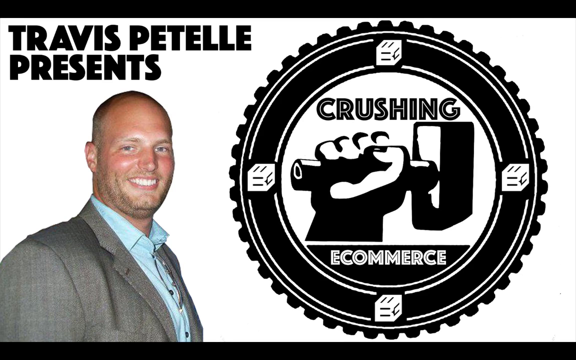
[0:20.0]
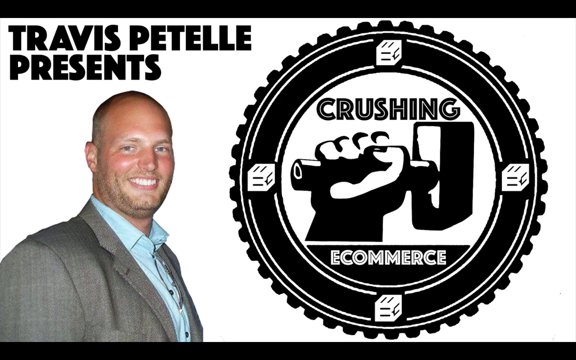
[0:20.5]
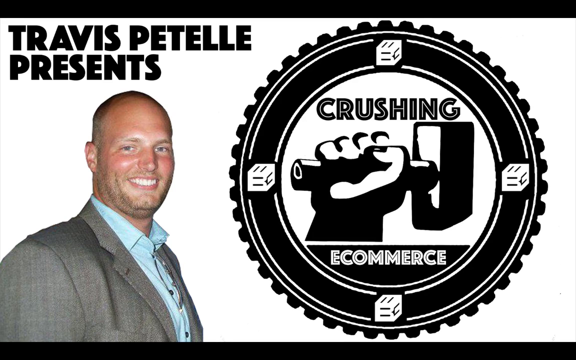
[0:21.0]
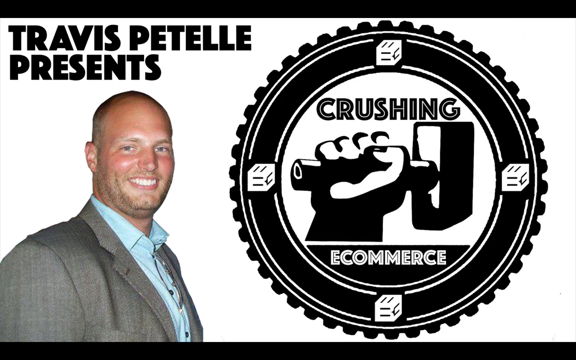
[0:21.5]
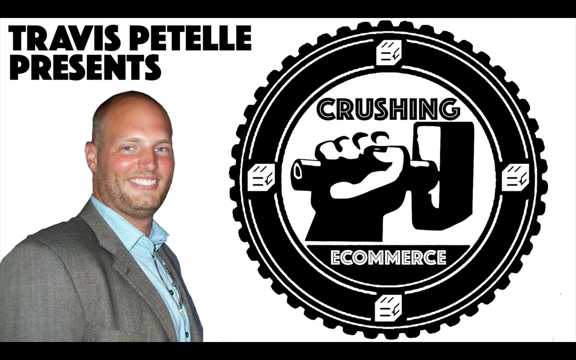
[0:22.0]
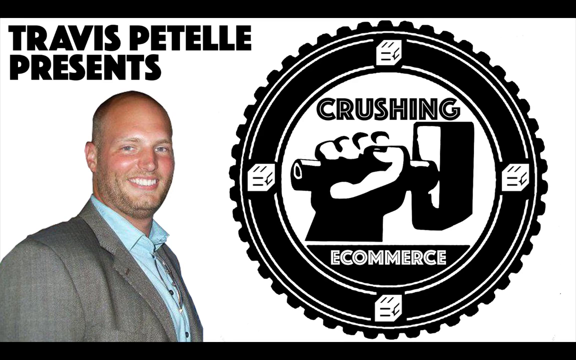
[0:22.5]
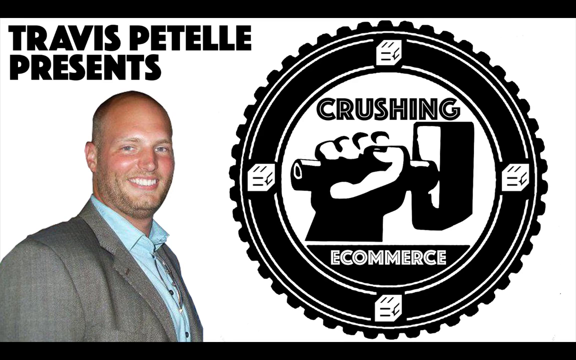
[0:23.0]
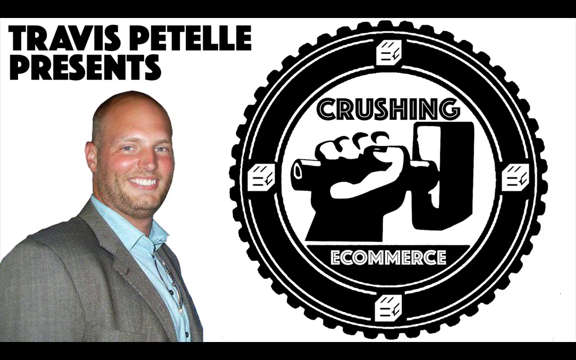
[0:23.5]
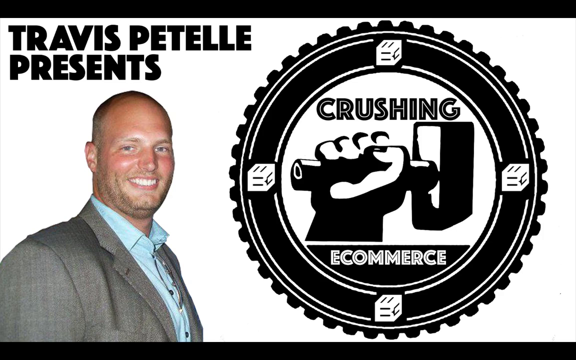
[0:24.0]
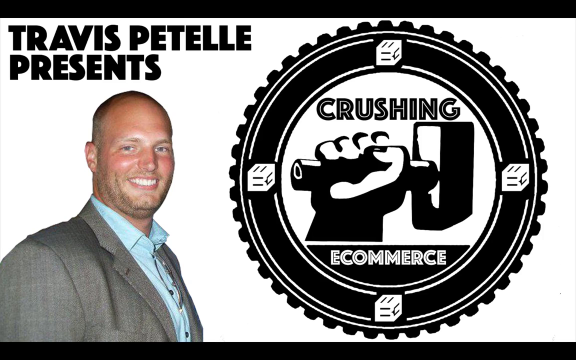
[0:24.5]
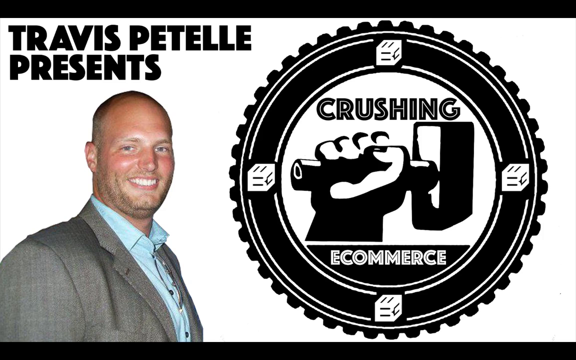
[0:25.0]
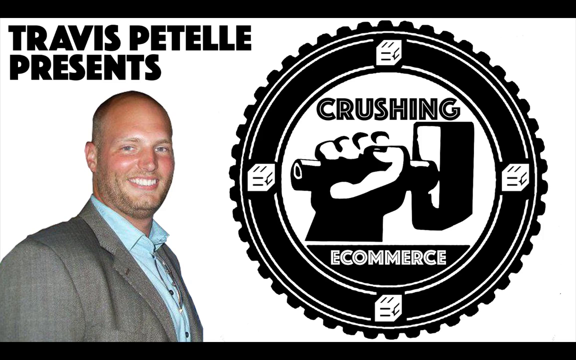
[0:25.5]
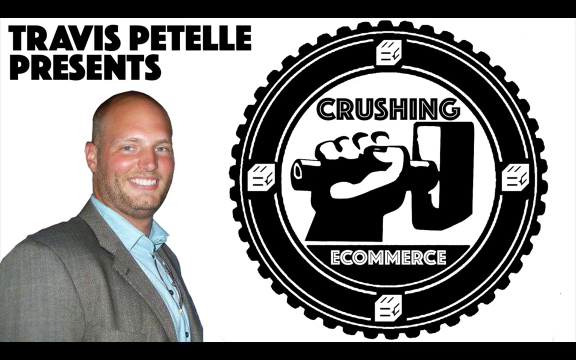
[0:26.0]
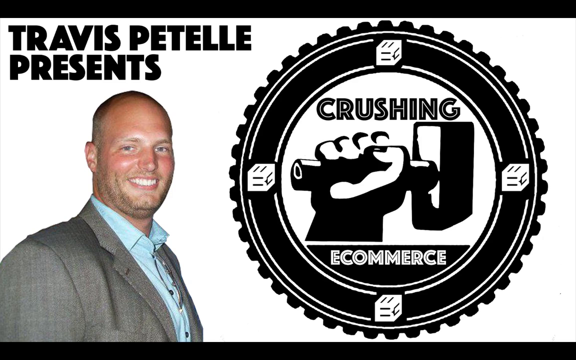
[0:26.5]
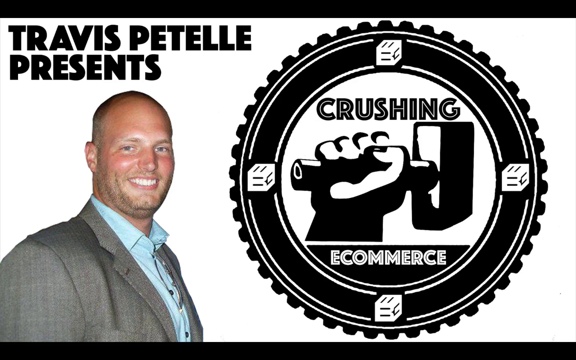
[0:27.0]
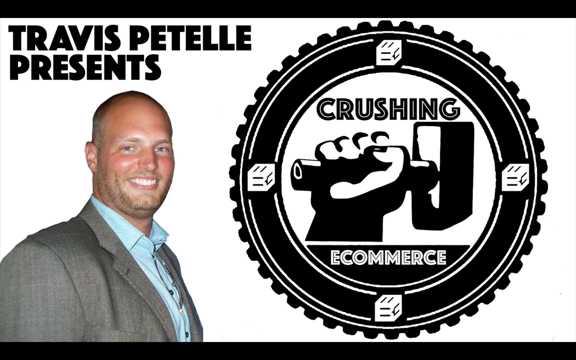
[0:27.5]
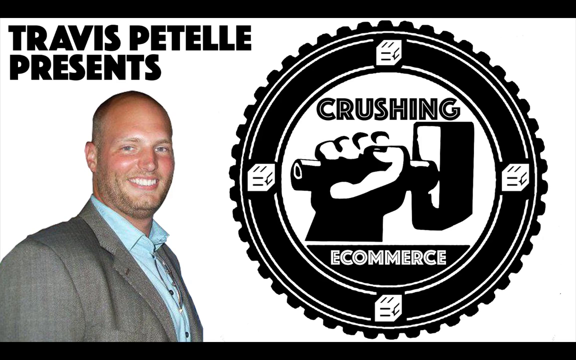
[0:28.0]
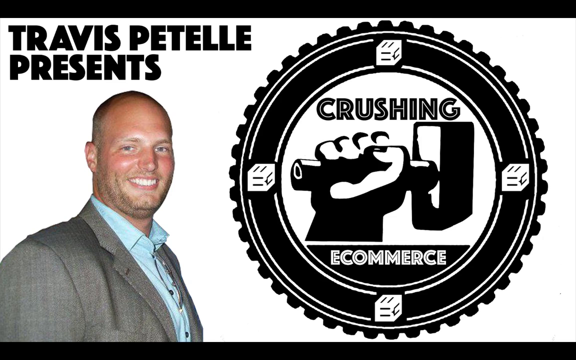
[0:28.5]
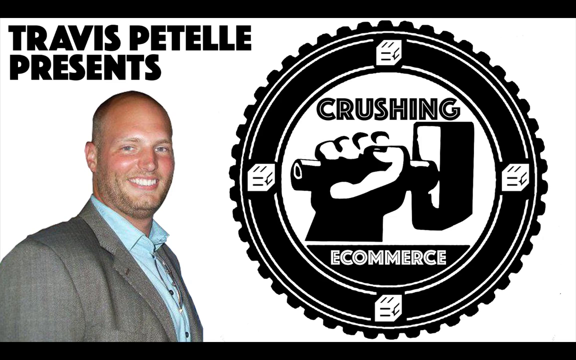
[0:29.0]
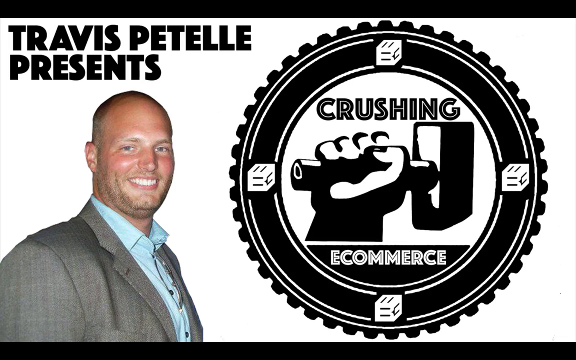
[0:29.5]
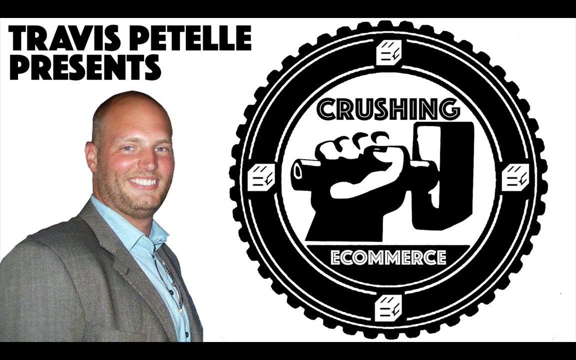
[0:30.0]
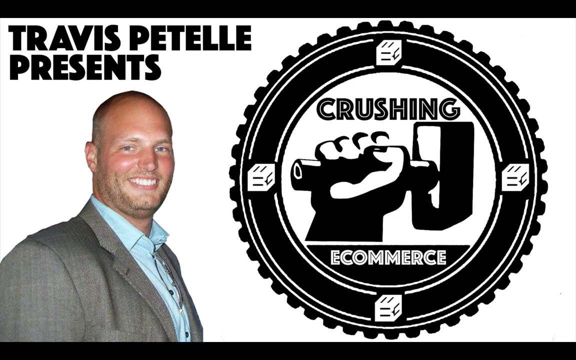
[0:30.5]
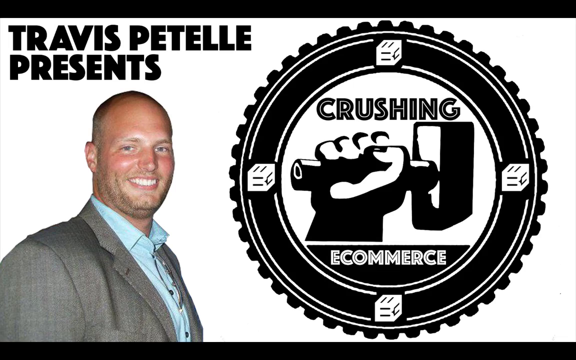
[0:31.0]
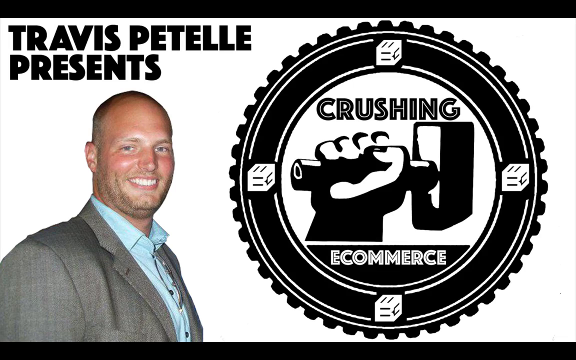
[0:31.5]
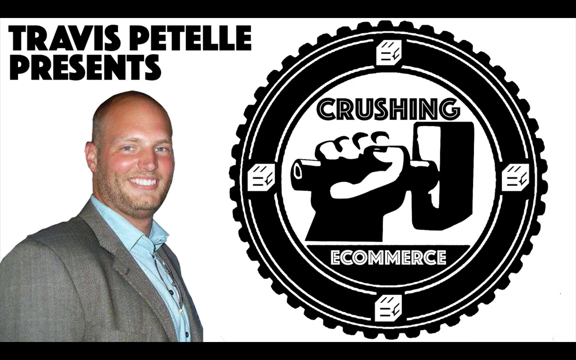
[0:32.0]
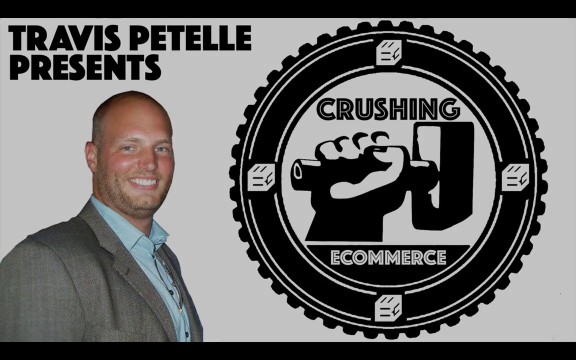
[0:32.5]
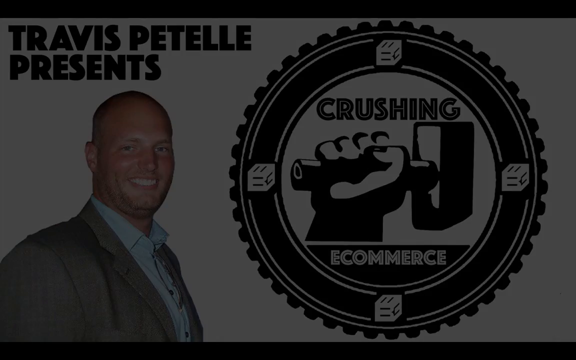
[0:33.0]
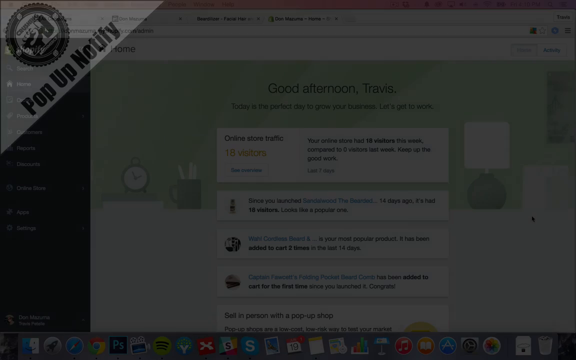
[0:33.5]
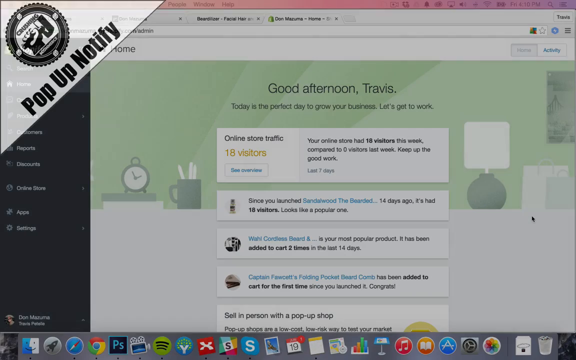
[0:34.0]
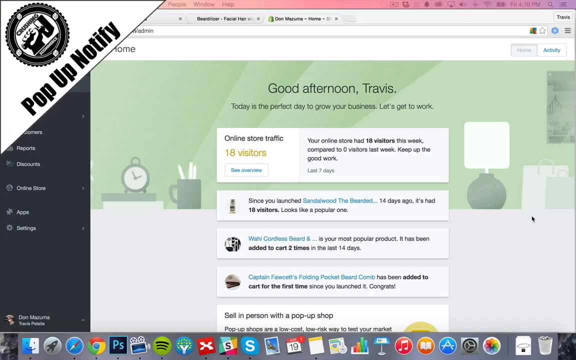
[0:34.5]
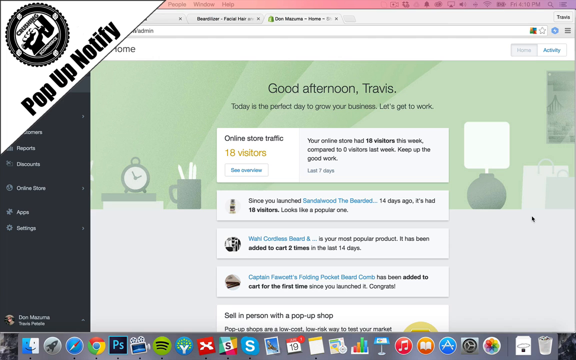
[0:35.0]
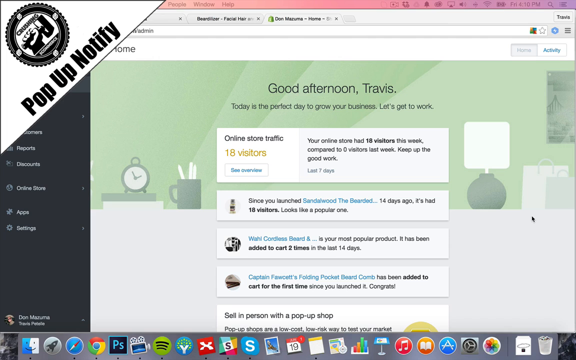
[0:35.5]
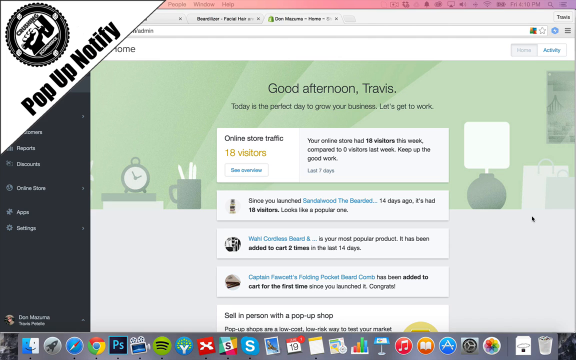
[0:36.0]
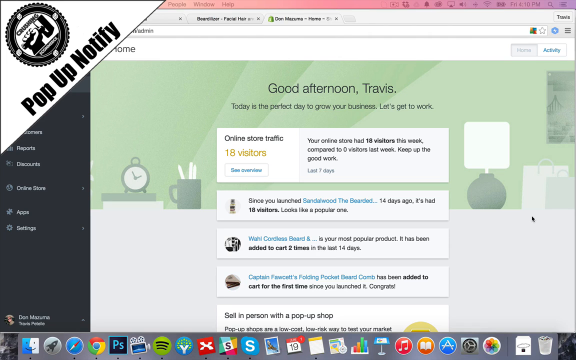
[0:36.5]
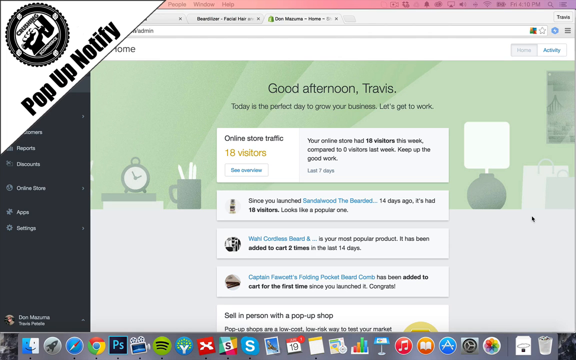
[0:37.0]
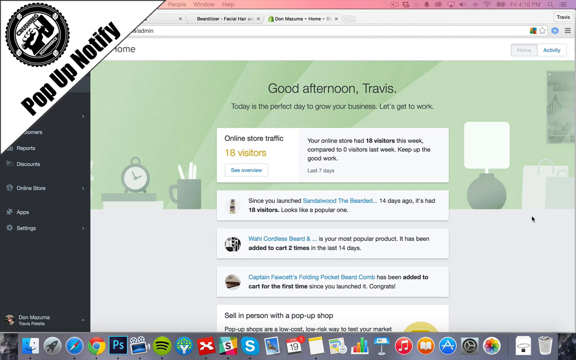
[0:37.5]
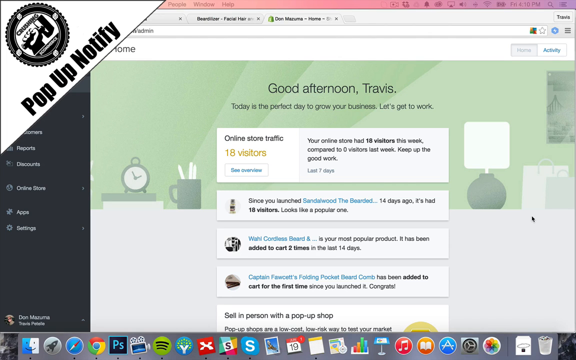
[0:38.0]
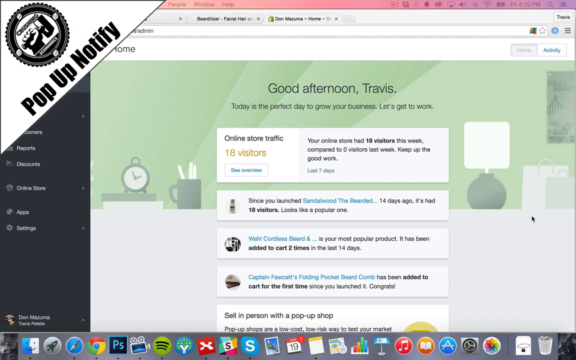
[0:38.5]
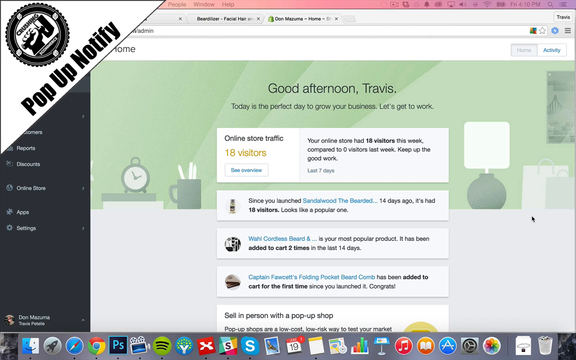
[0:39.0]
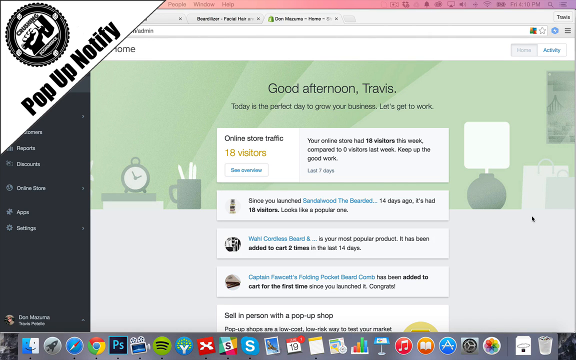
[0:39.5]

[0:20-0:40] The same view continues, with the person's name at the top and "Presents" on it, and a man, apparently the same man, smiling. "Pop up notify" appears in the upper left-hand corner. On the screen the text reads "Good afternoon, Travis. Today is the perfect day to grow your business. Let's get to work." A section titled "Online store traffic" shows "18 visitors" and "See overview", with the text "Your online store had 18 visitors this week compared to 0 visitors last week. Keep up the good work" and "for the last 7 days". Another line says that since sandalwood was launched 14 days ago it has had 18 visitors, and "looks like a popular one". A product, possibly called "cordless beard", shown with a hand symbol, is listed as "your most popular product", having been put in the cart two times in the last 14 days.